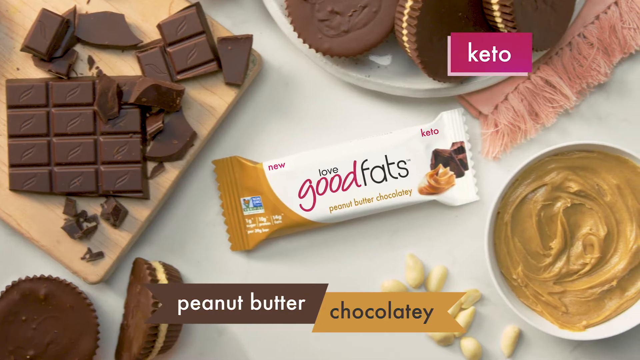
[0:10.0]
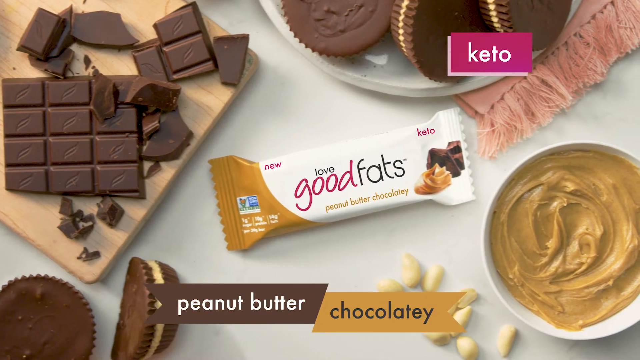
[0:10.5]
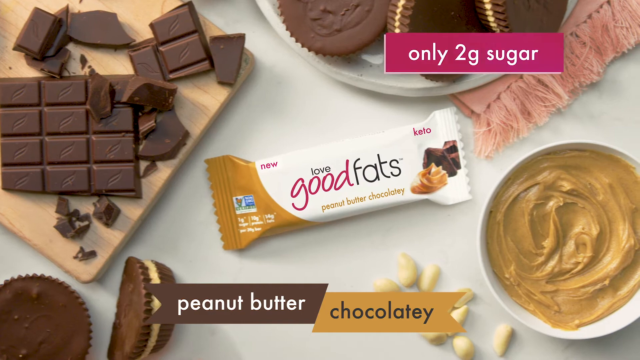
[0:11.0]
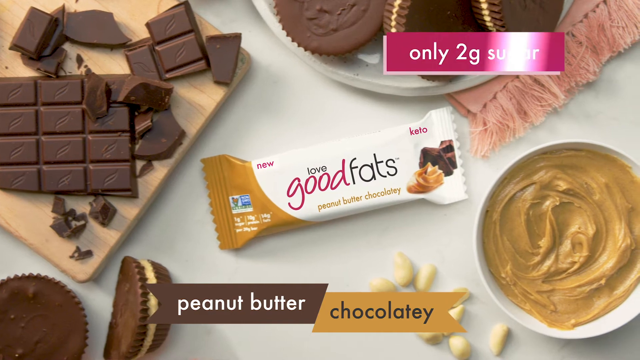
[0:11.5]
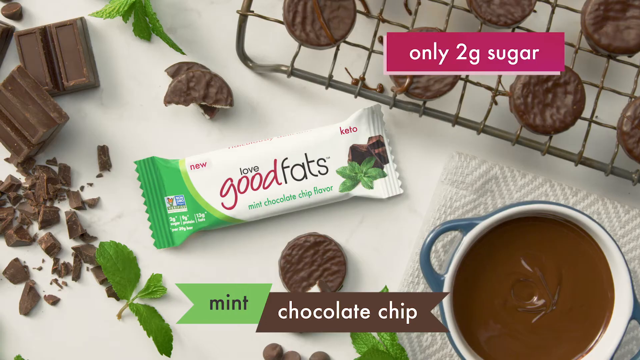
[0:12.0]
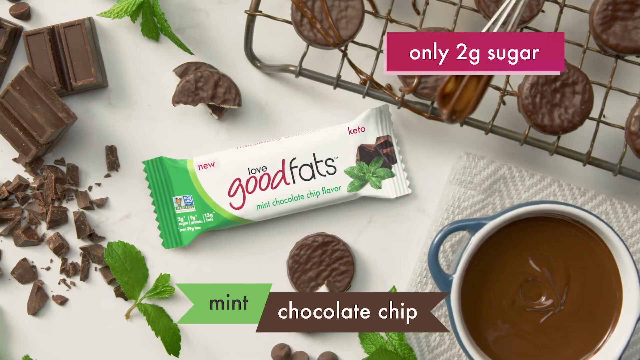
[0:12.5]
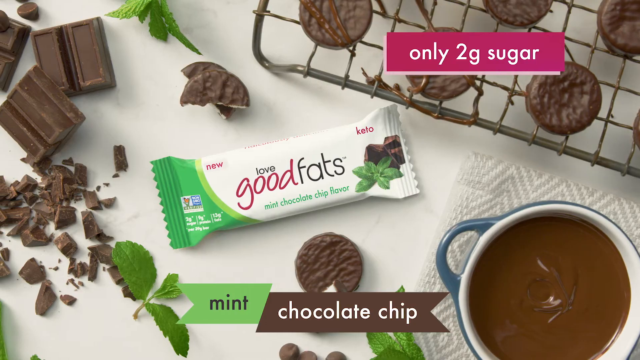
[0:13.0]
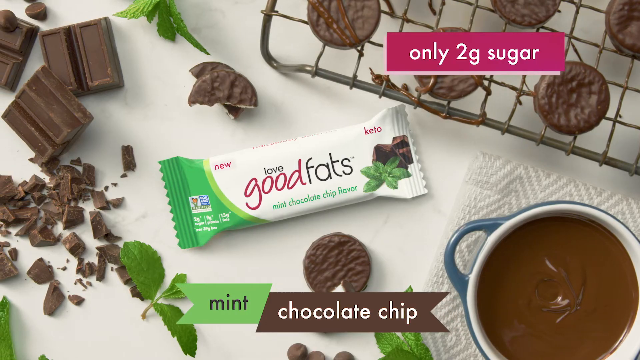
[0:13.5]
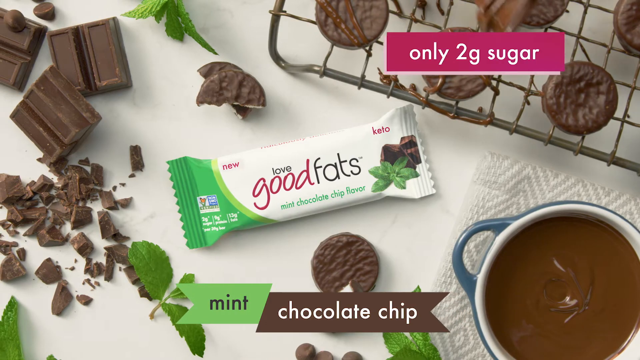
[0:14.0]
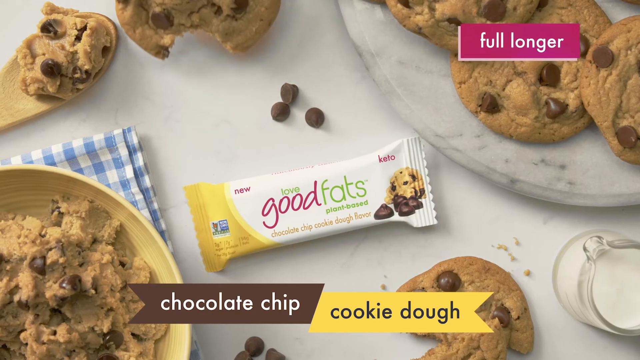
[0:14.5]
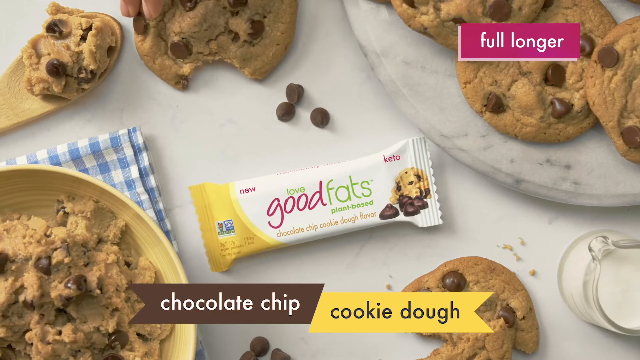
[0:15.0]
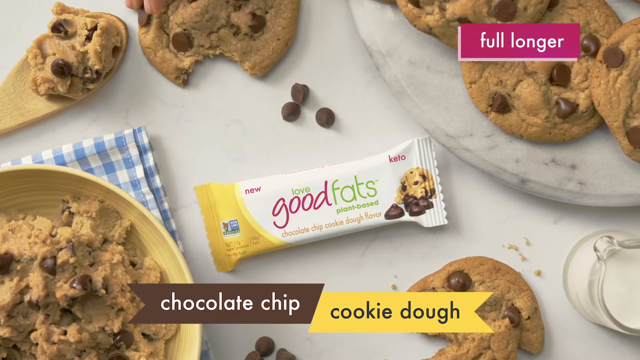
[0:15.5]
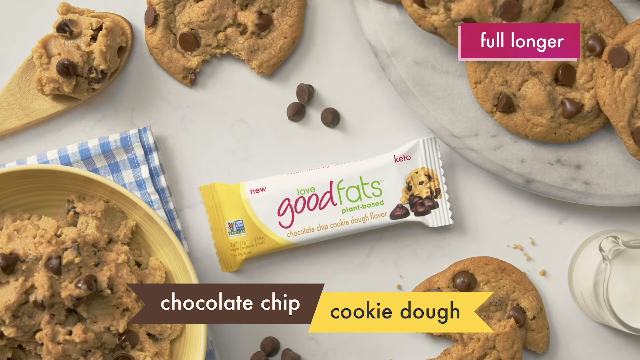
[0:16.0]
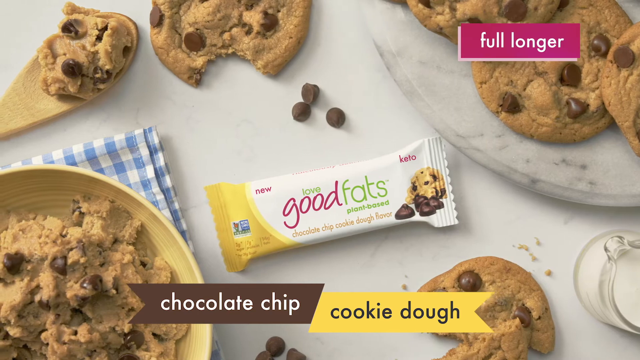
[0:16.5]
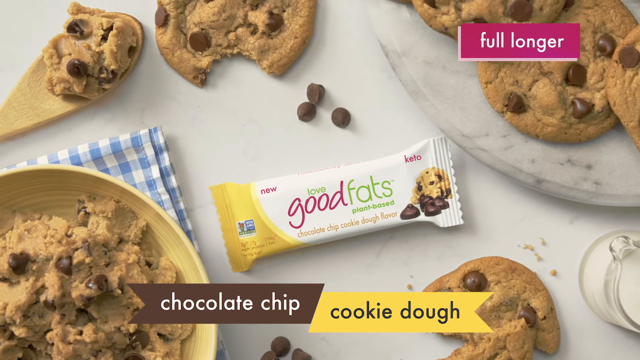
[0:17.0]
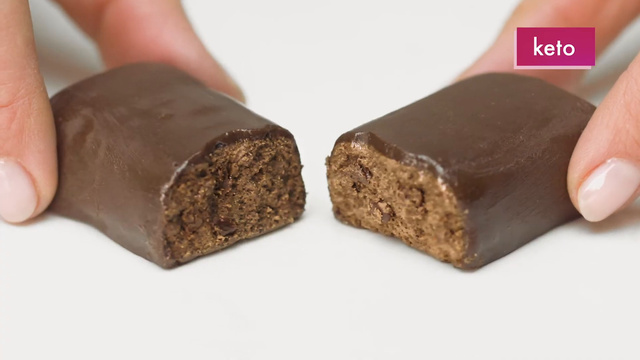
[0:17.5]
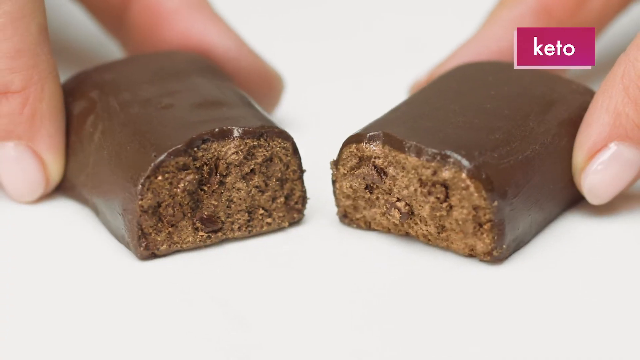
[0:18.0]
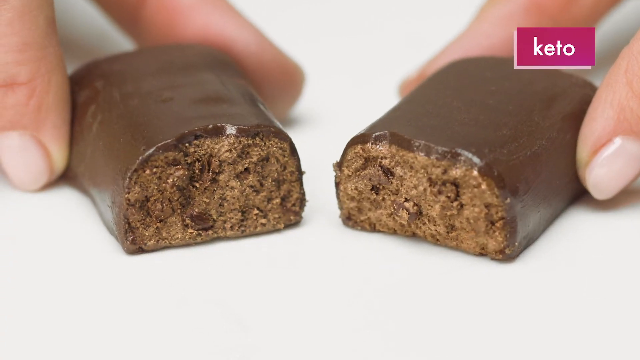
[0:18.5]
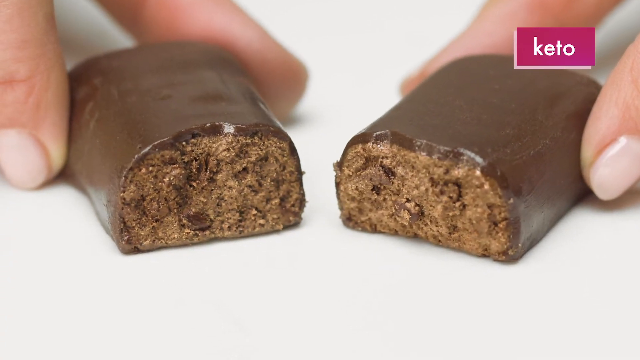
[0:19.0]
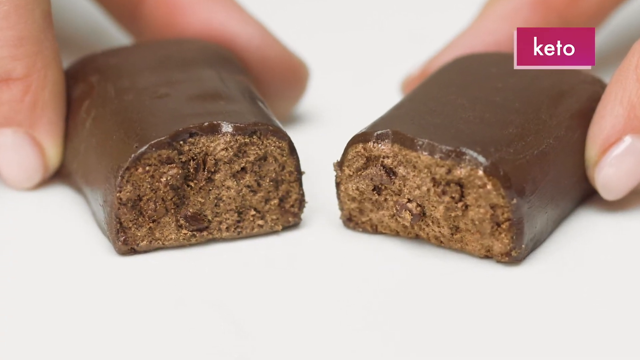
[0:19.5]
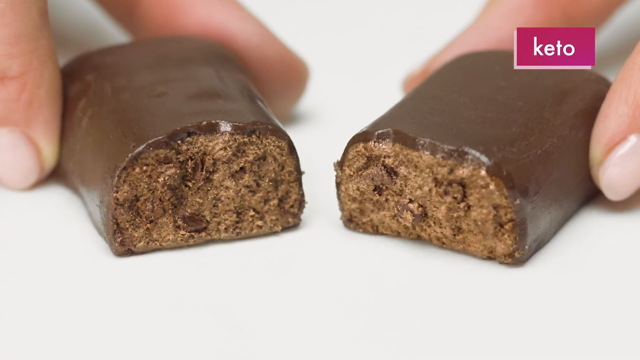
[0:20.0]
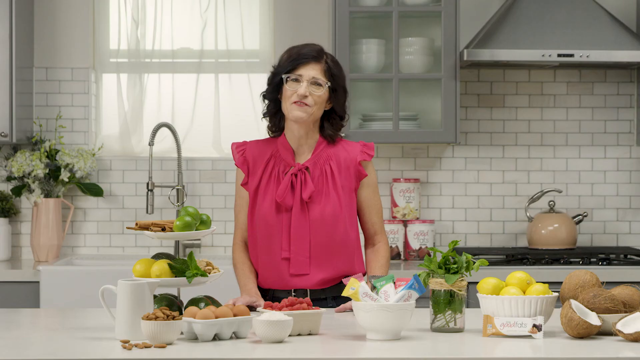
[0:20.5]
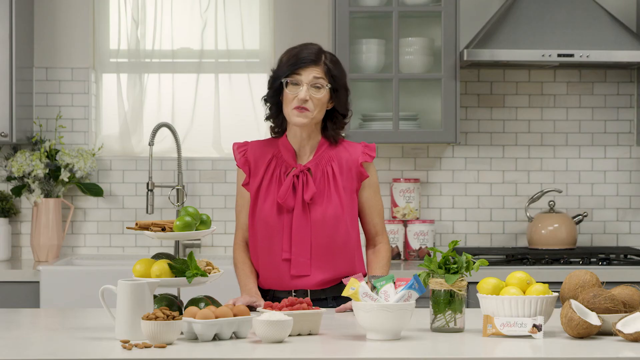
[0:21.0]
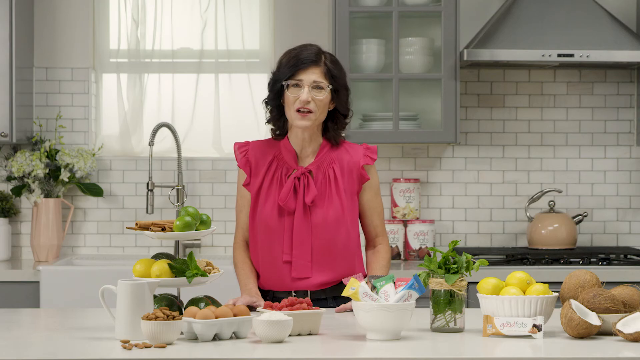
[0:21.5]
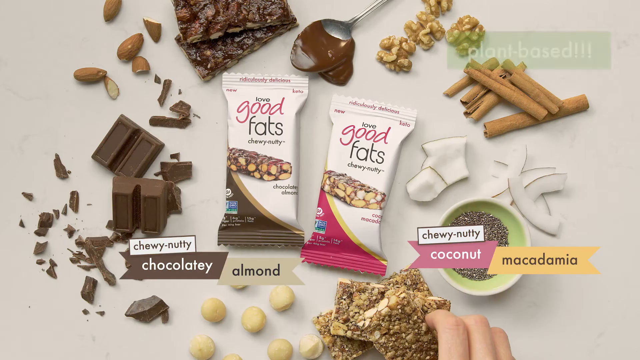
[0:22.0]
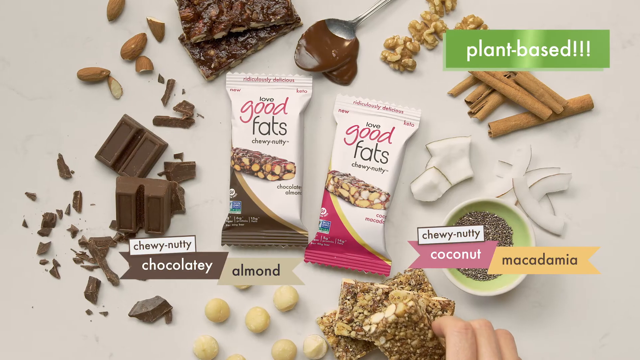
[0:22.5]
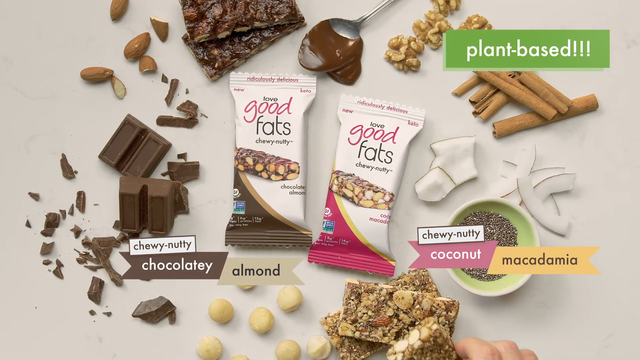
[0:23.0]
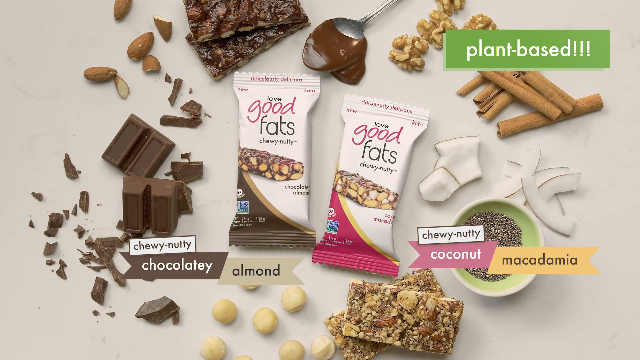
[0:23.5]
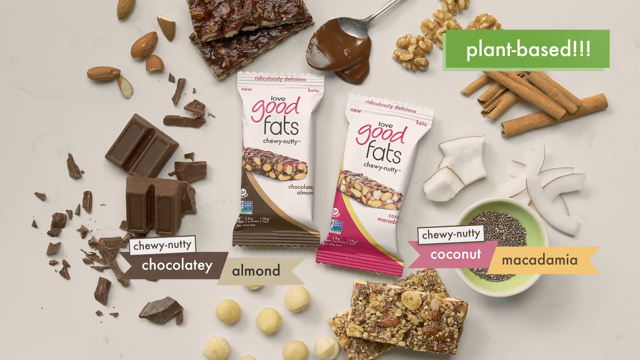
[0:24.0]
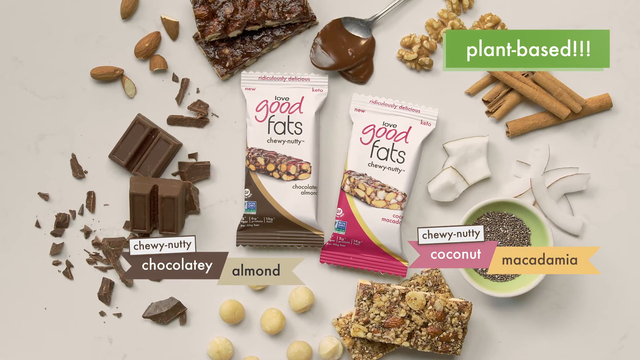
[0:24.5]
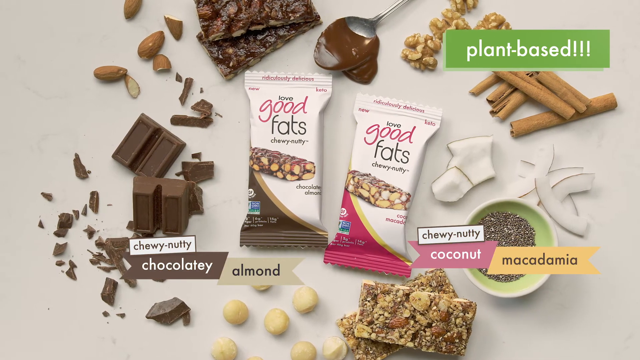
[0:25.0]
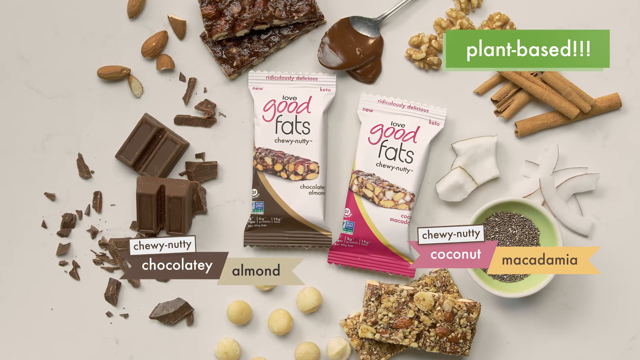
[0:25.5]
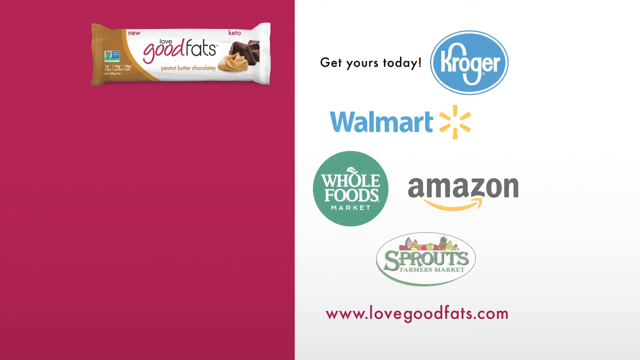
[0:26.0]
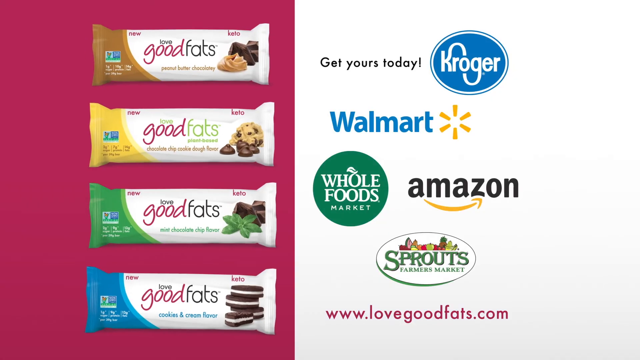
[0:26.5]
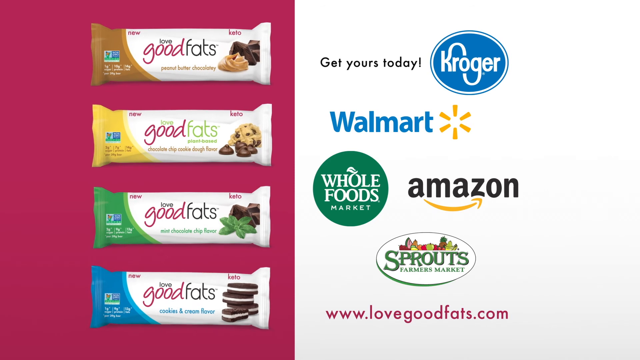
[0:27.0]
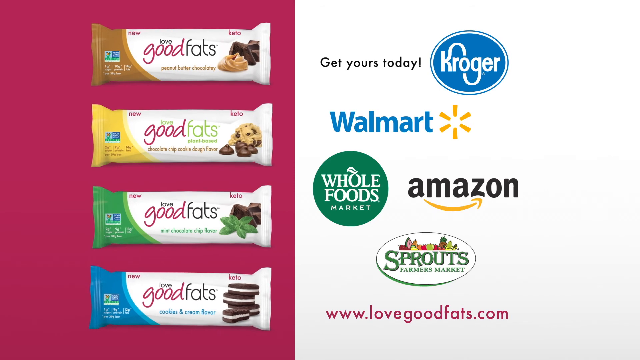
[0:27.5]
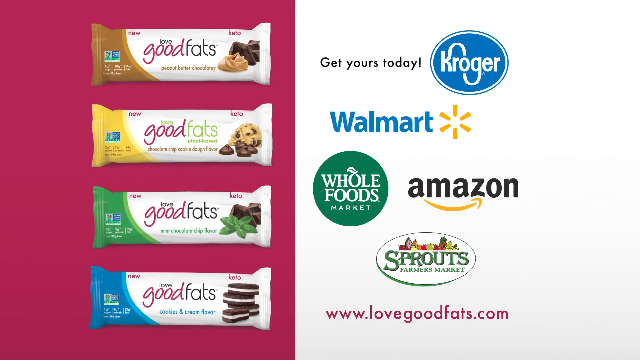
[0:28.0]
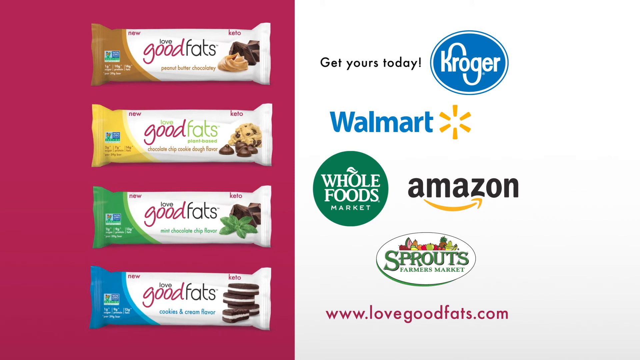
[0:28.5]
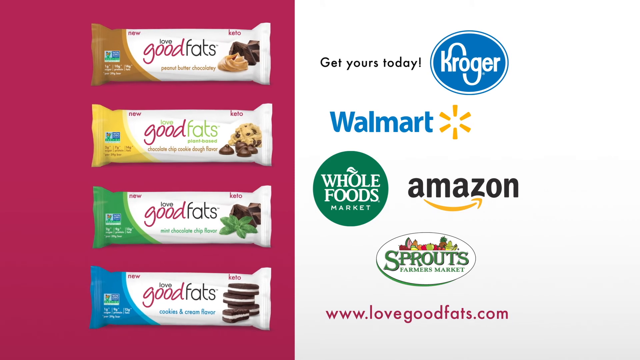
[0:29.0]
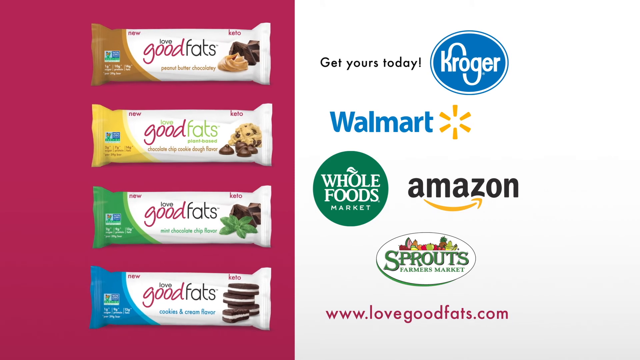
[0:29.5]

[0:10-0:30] Different types of sugar-and-fats chocolates are shown, with names including Good Eats, Love and Chocolate Chips, and their designs are visible. Many varieties appear along with the ingredients used: Plant Based, Chewy Nutty Coconuts, Macadamia, and Chewy Nutty Chocolaty Almond. Good Eats, Good Fats is listed as available from stores including Kroger, Walmart, Whole Foods and Amazon, and from the website www.lovegoodfats.com. The ingredients show it contains just 2kg of sugar. The lady wears a pink top and her glasses.